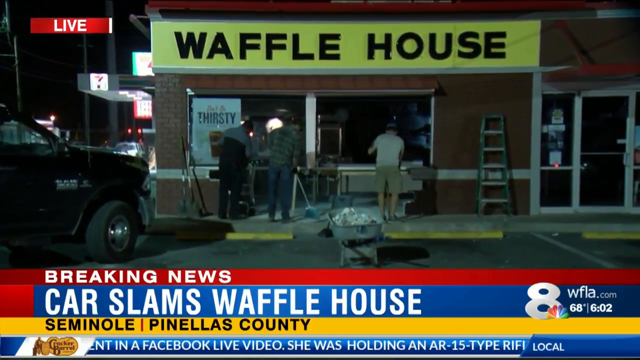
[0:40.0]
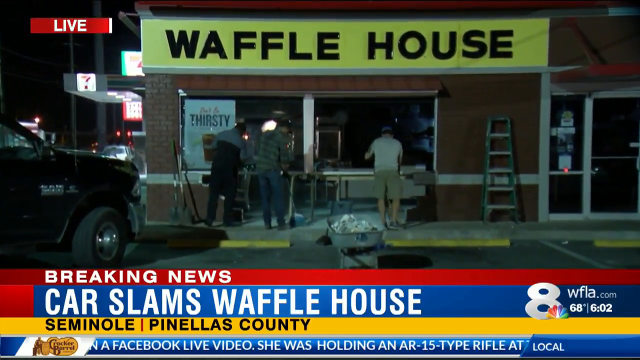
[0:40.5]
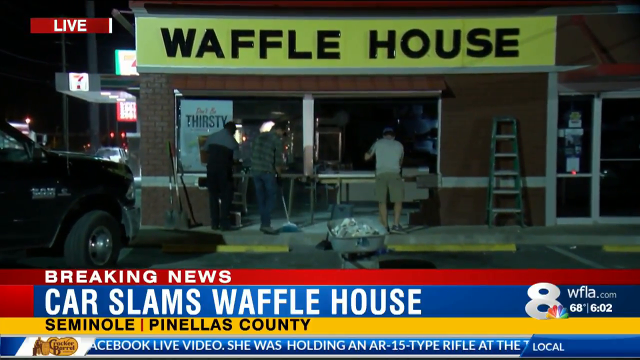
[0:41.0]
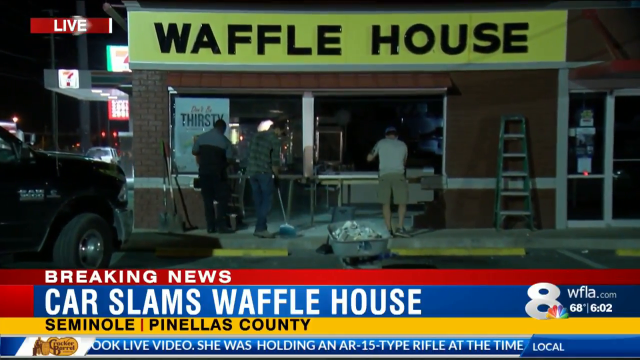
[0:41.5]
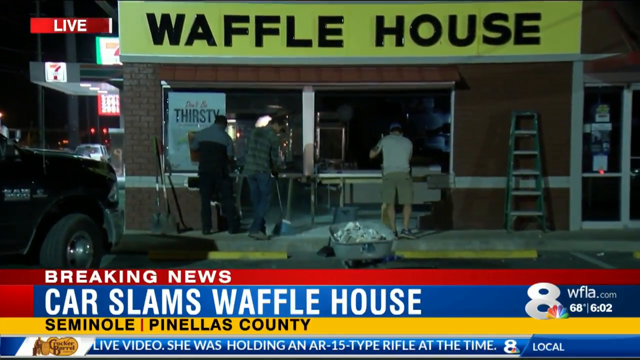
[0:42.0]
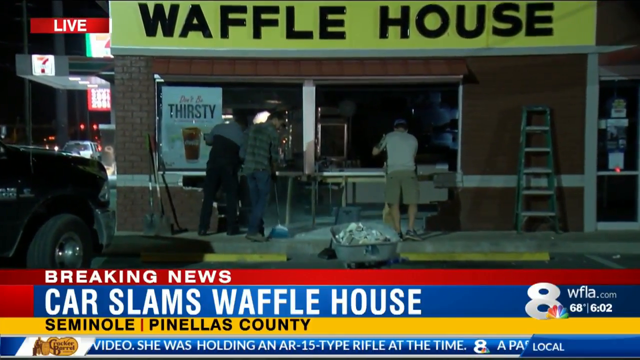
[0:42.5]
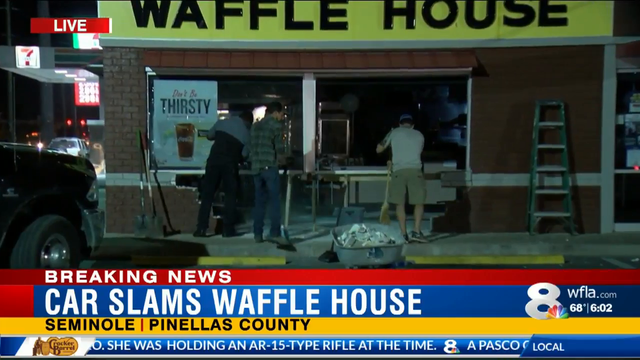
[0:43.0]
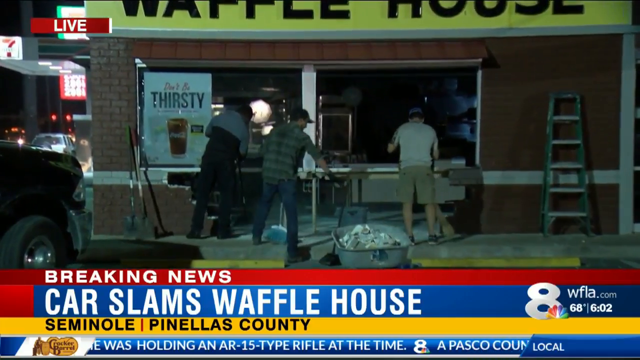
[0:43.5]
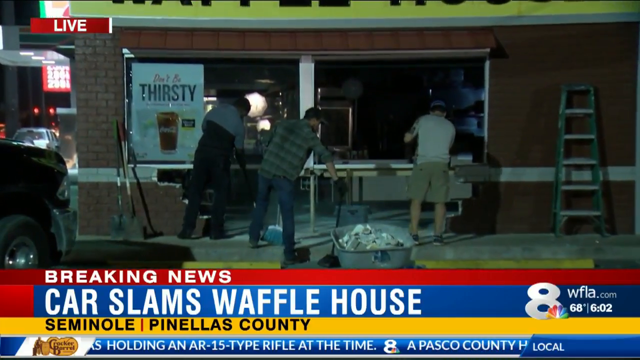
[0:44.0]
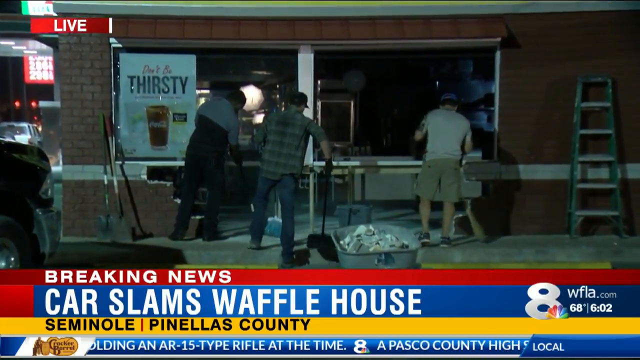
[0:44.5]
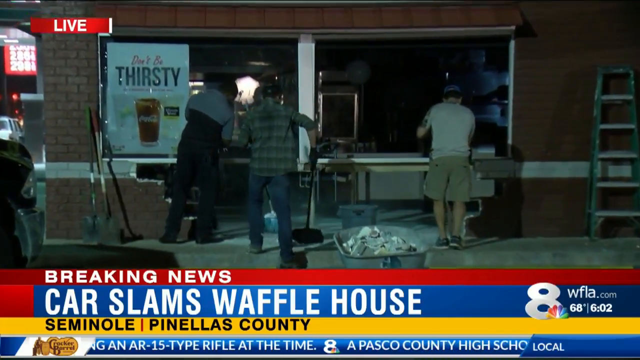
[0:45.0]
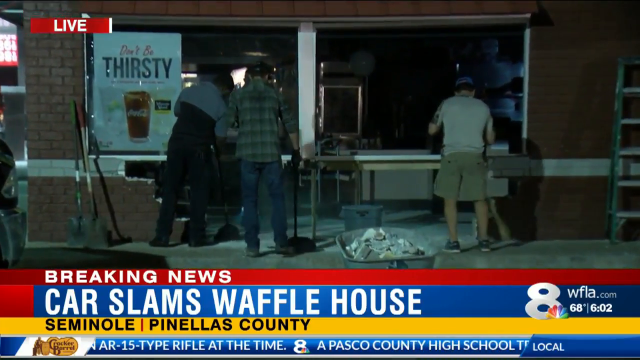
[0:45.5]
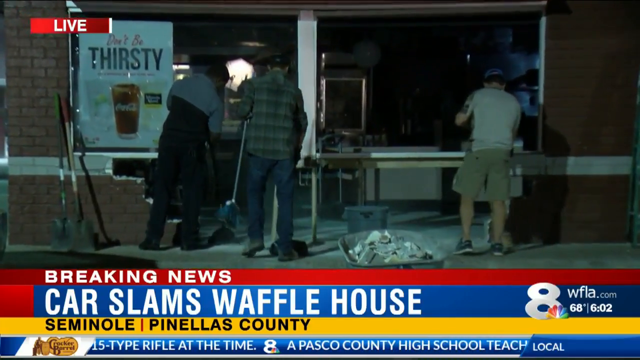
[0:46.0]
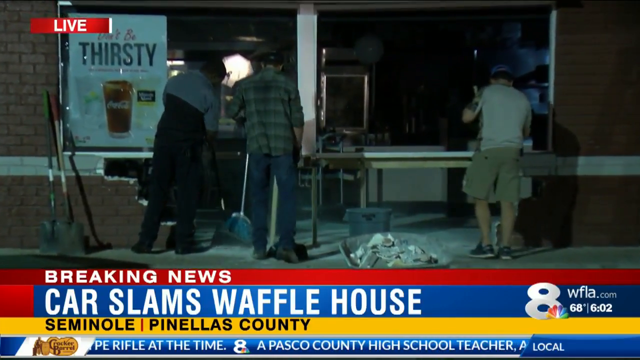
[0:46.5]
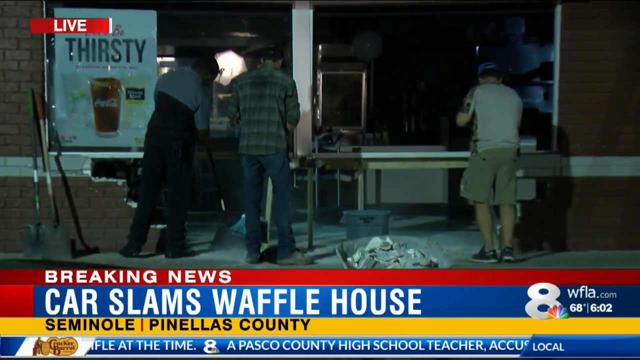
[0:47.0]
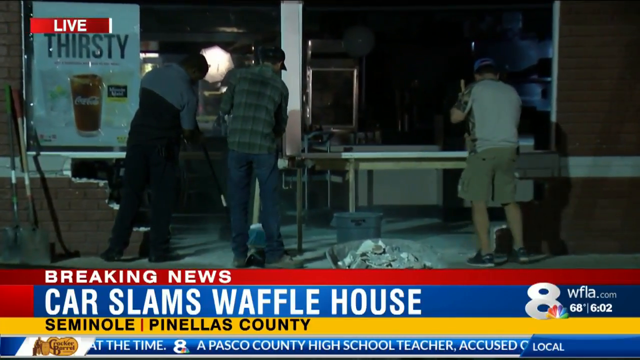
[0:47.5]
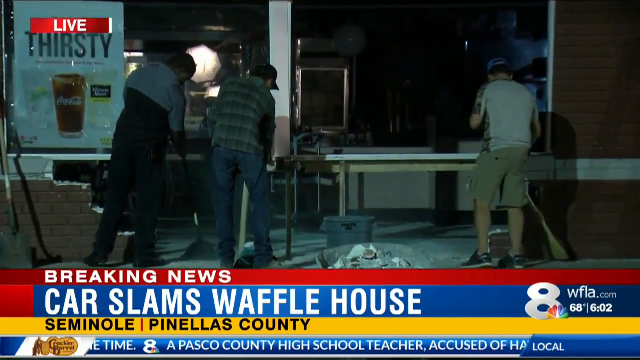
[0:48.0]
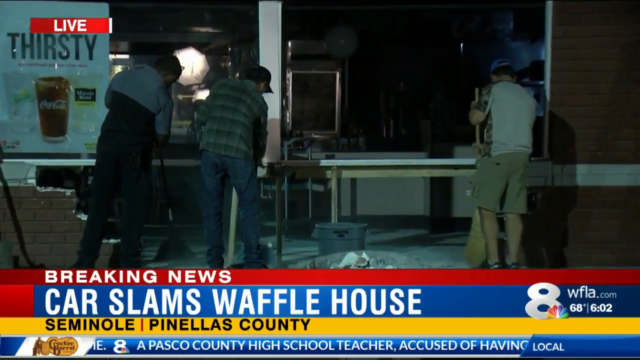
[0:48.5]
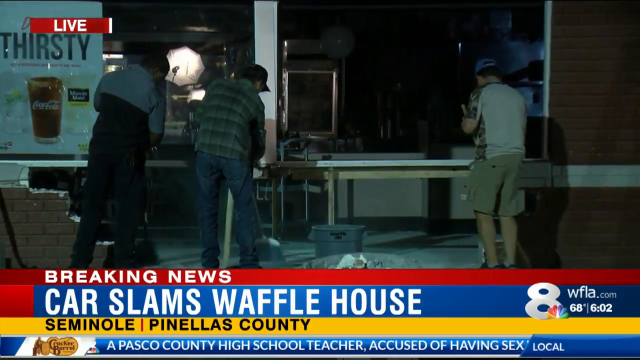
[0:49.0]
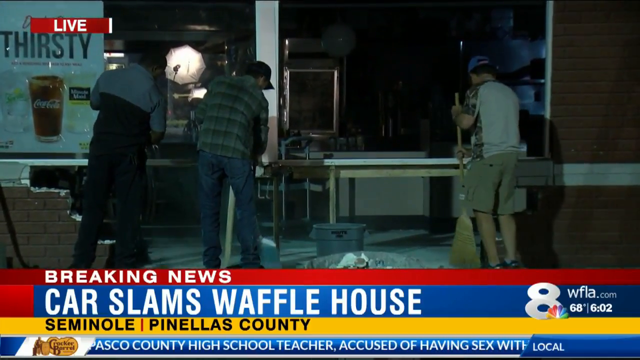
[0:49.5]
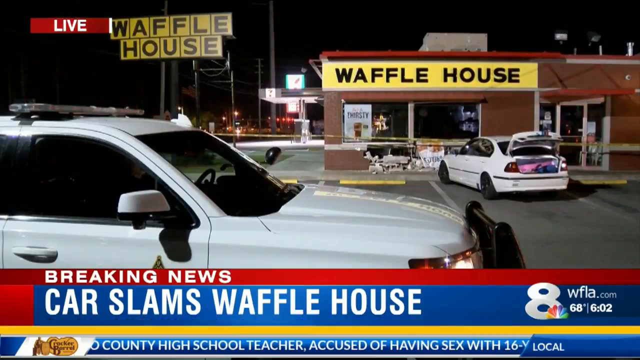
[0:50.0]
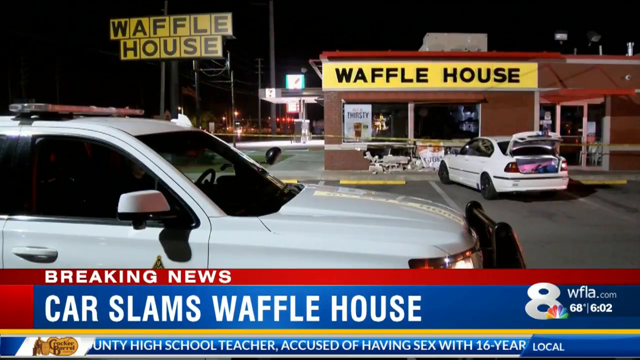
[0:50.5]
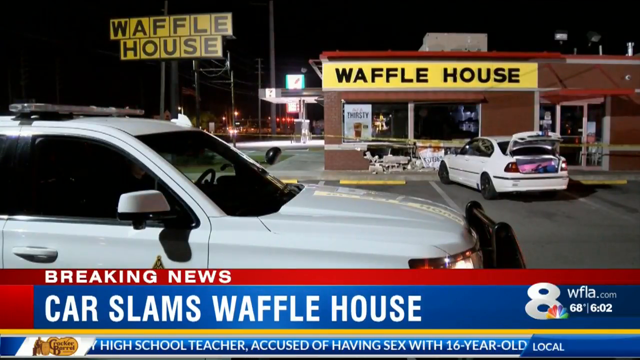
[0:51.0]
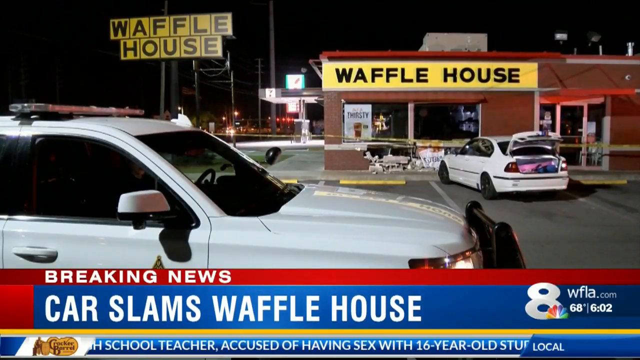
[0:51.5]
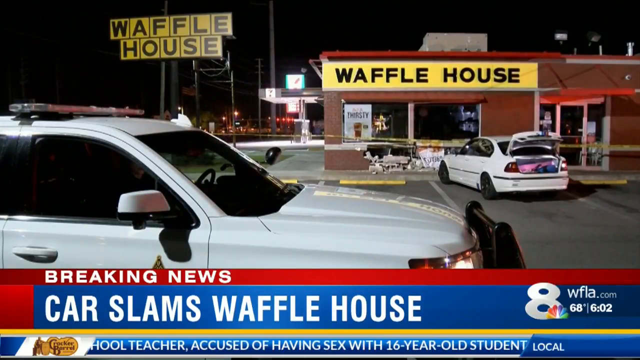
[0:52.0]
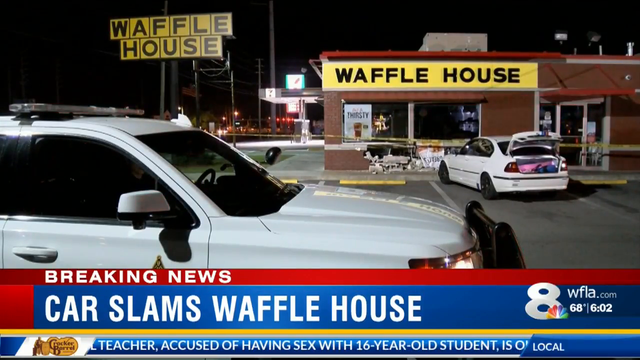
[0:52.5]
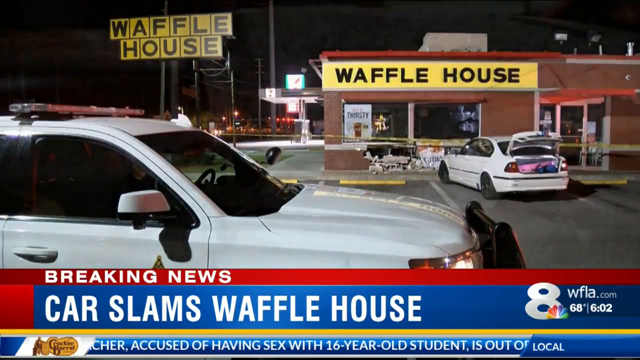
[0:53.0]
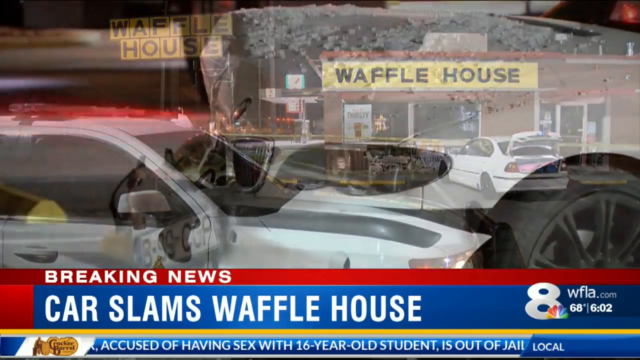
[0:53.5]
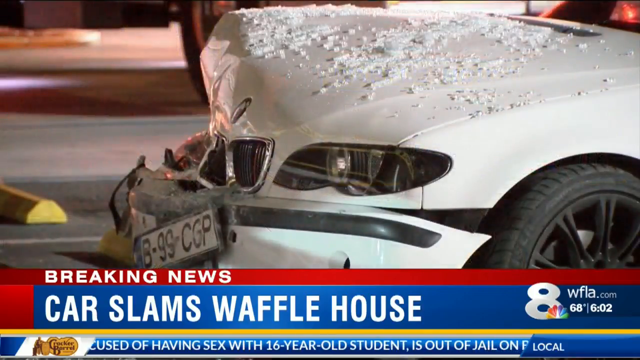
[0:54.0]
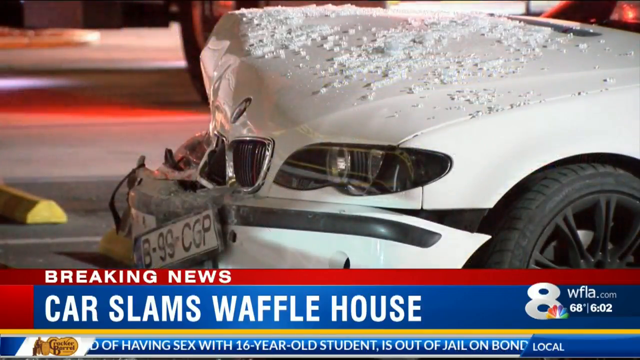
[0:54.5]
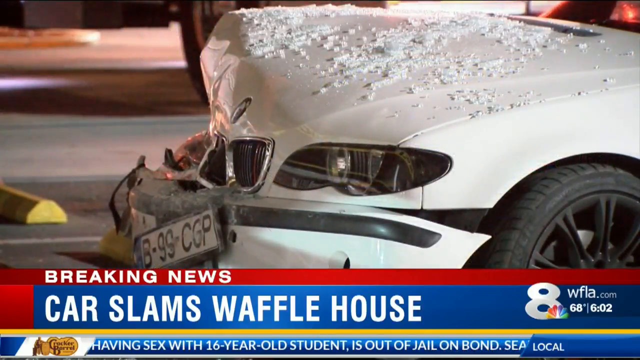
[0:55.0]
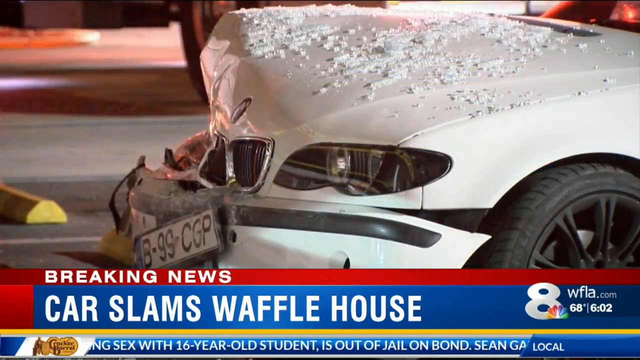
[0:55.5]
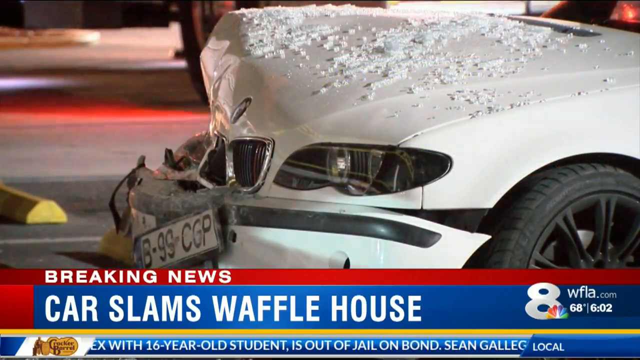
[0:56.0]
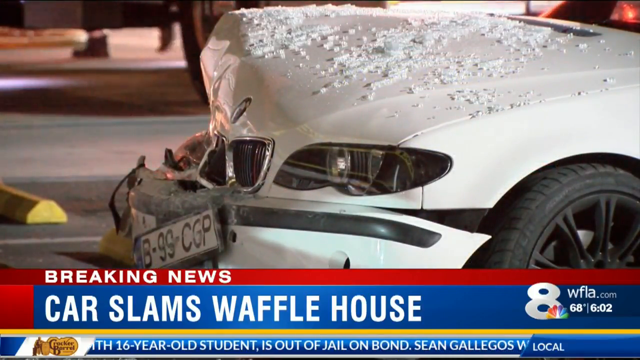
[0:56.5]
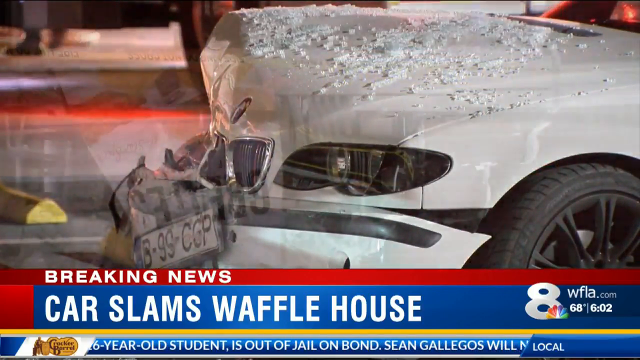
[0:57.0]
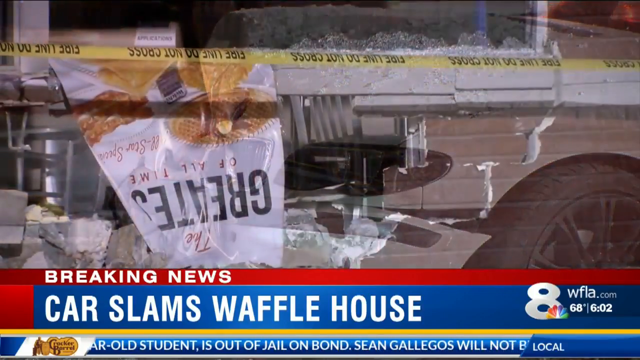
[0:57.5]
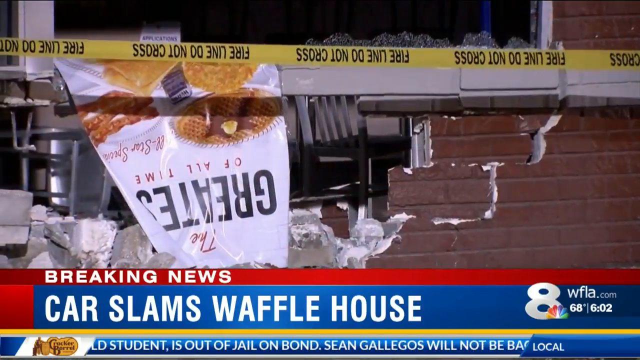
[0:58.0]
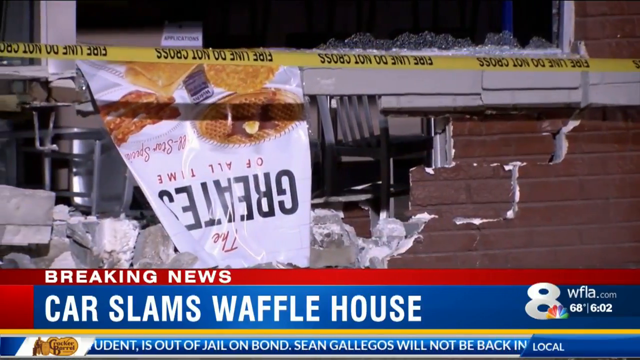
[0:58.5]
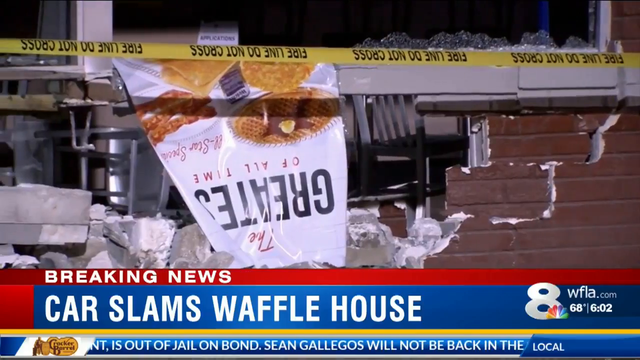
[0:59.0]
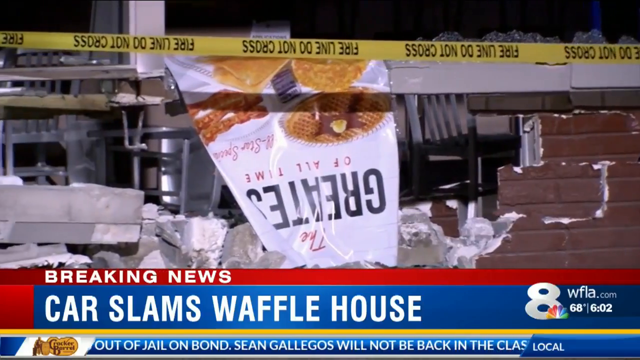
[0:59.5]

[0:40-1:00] At night, people, all men, sweep up the mess left by the car accident, including small pieces of brick from the broken wall and other debris on the floor. A stepladder is near the door. The yellow tape put up by the police officers is shown. "Waffle House" is written on the front of the building in black bold letters, together with yellow.